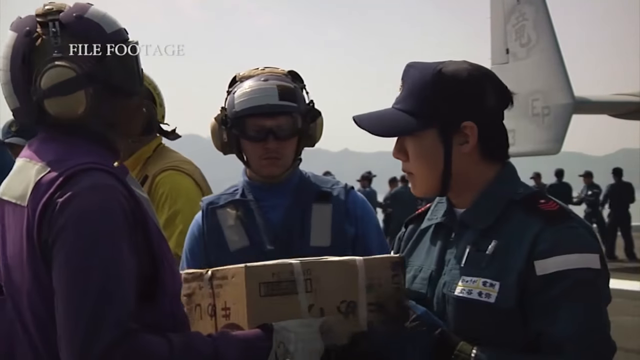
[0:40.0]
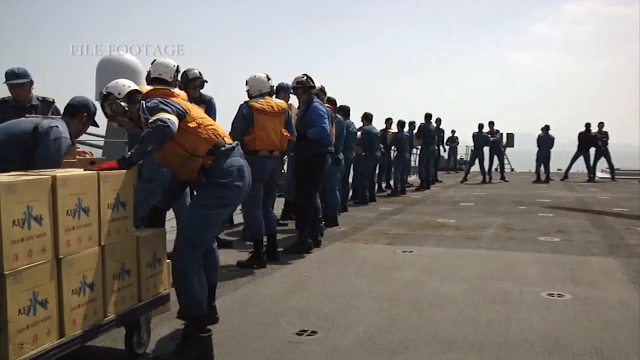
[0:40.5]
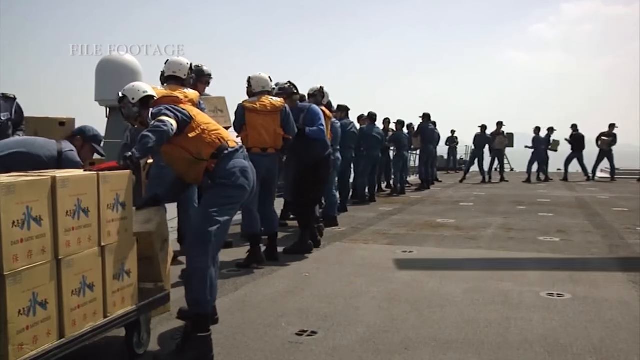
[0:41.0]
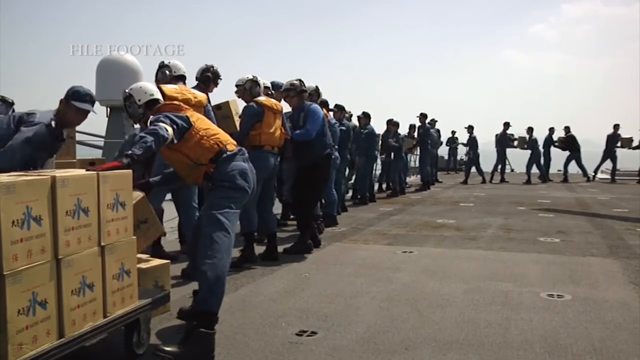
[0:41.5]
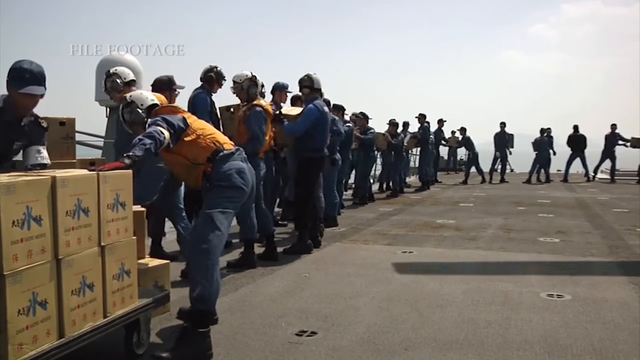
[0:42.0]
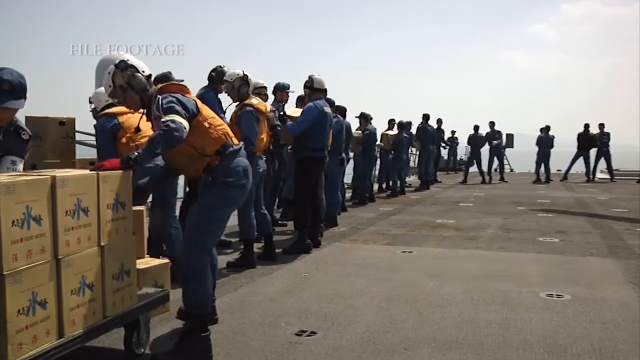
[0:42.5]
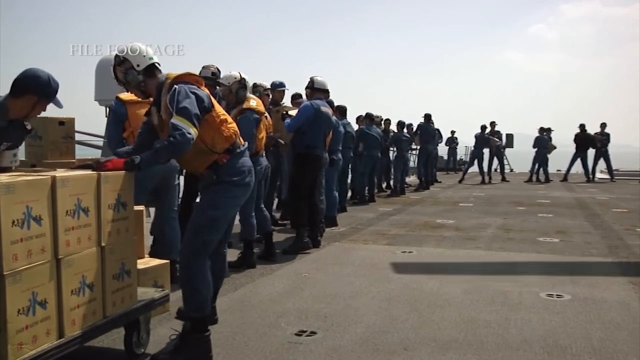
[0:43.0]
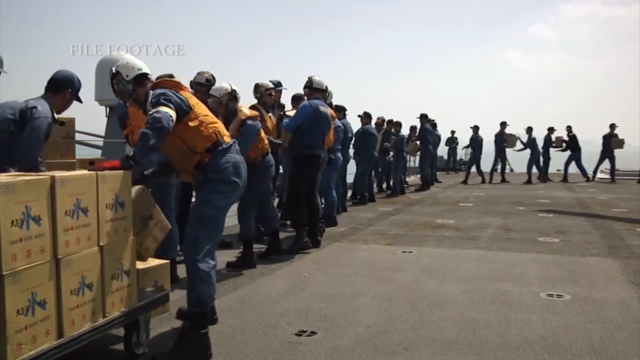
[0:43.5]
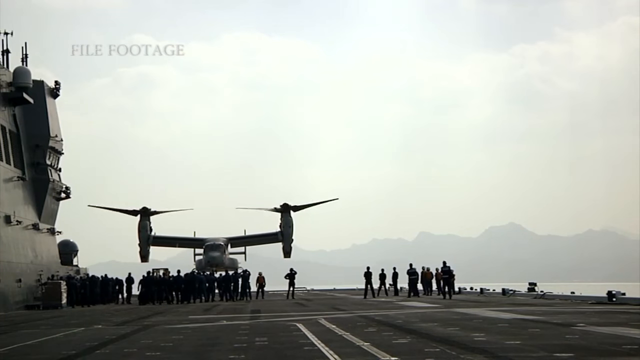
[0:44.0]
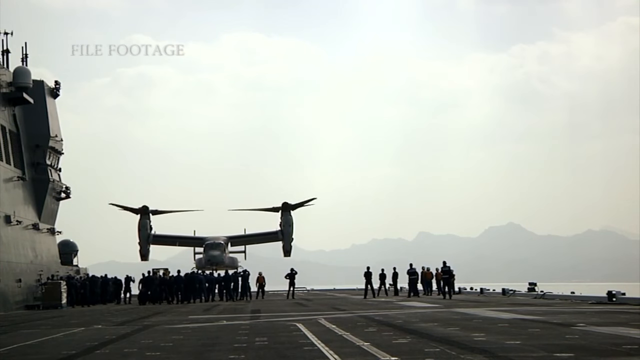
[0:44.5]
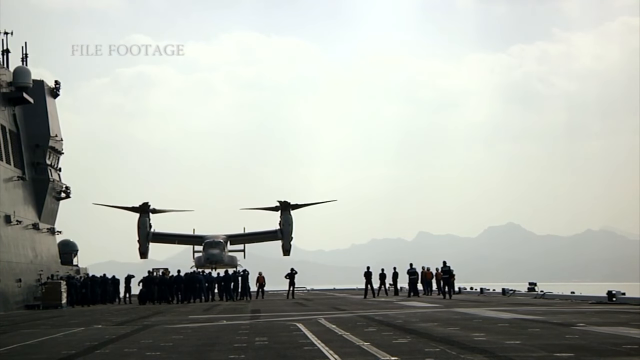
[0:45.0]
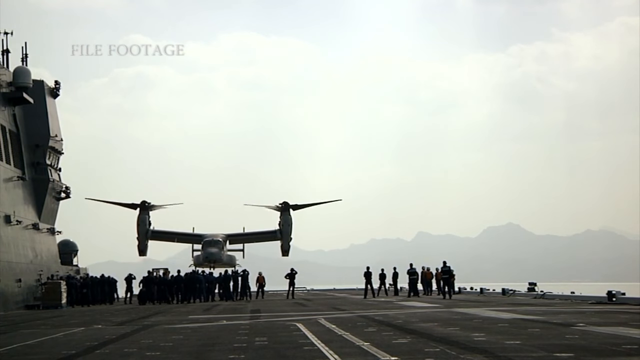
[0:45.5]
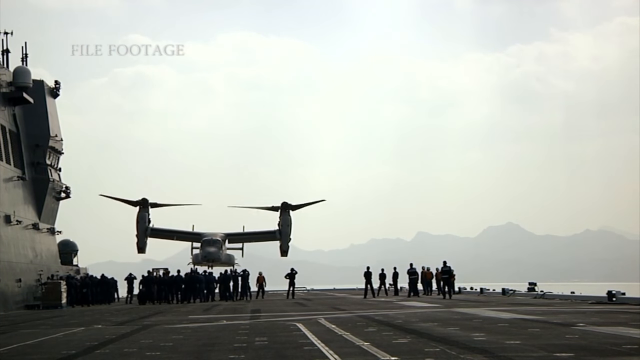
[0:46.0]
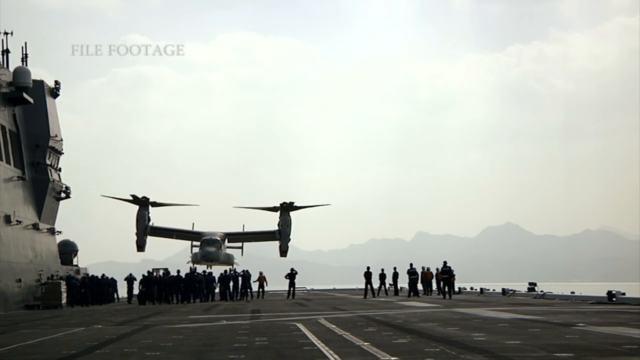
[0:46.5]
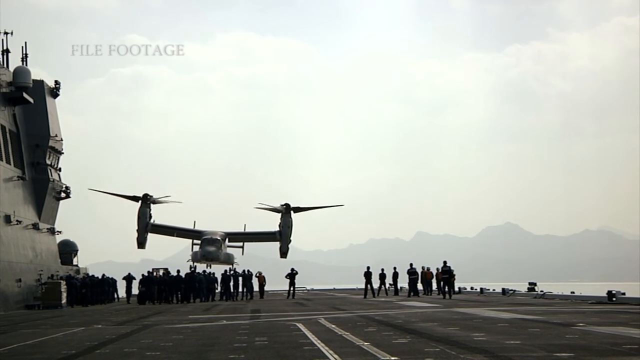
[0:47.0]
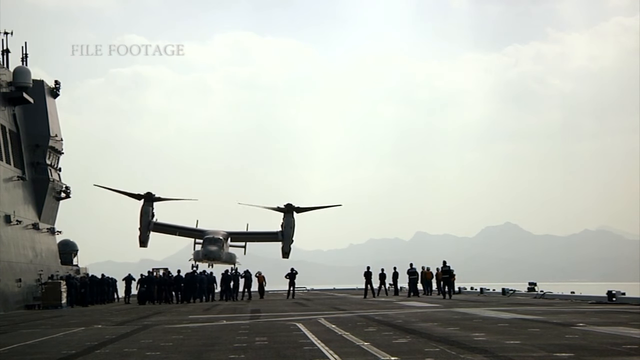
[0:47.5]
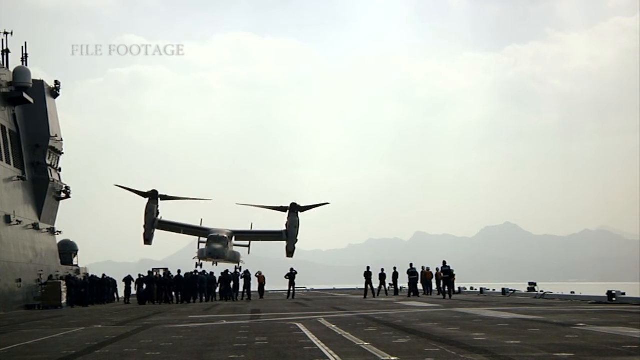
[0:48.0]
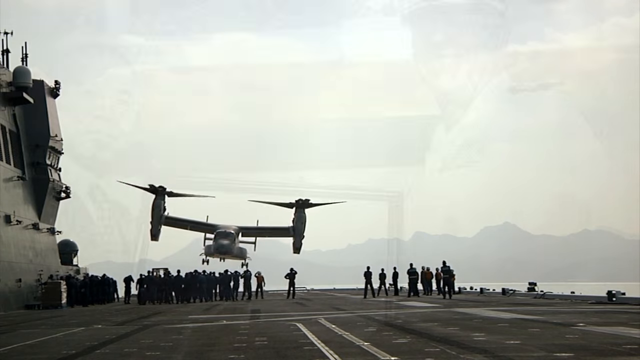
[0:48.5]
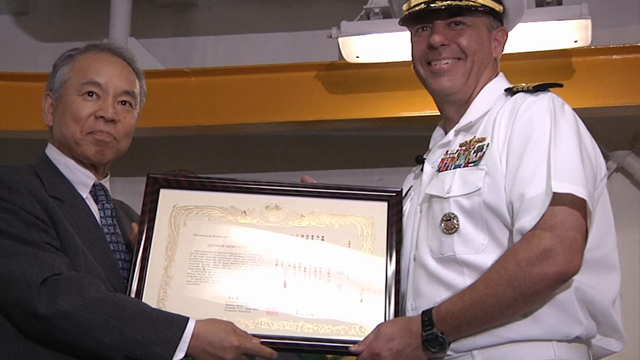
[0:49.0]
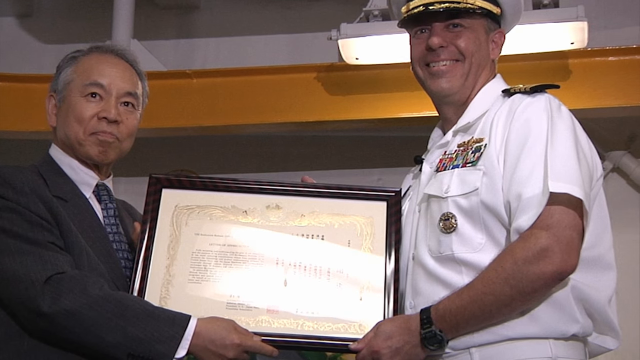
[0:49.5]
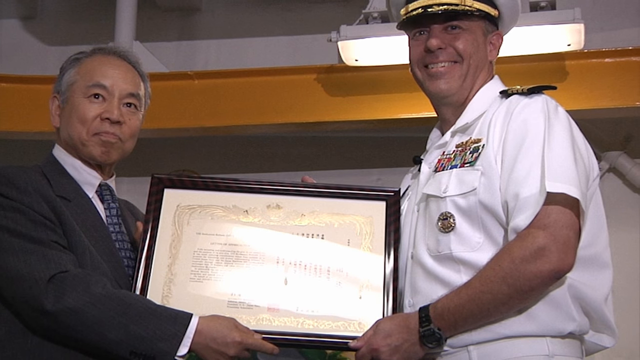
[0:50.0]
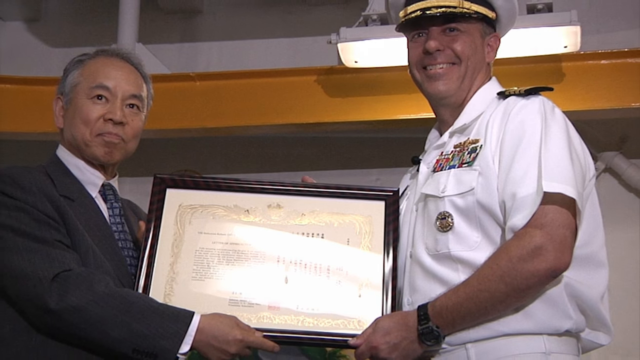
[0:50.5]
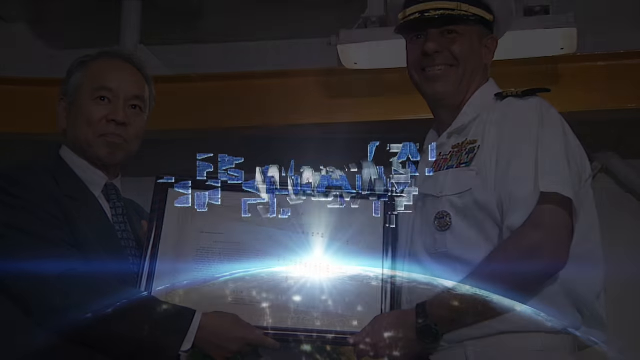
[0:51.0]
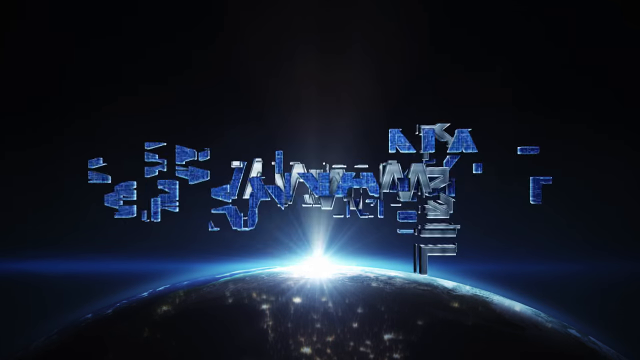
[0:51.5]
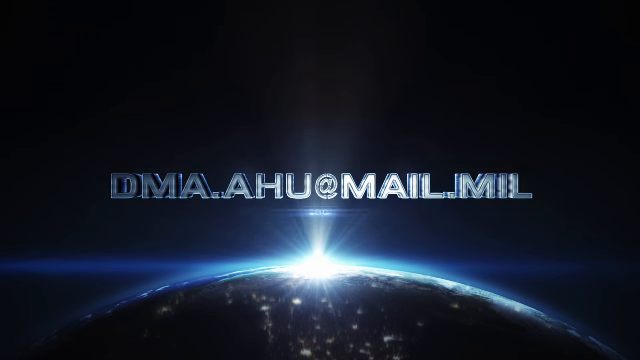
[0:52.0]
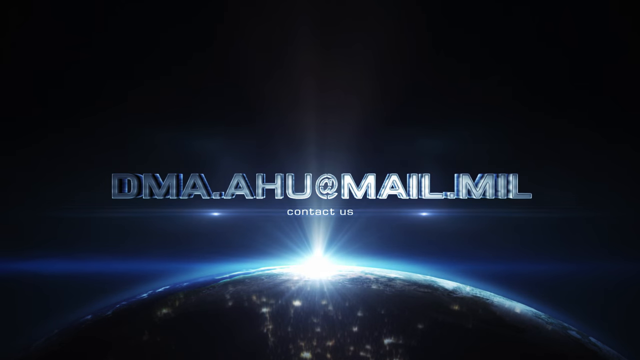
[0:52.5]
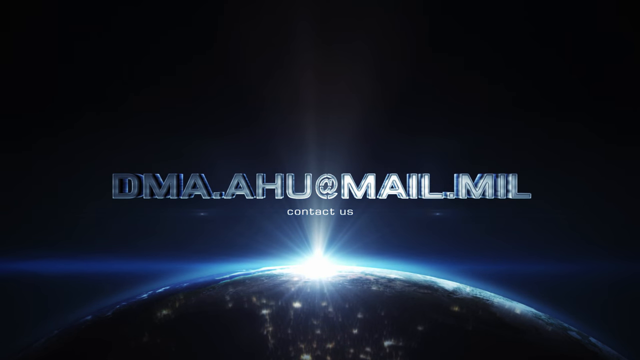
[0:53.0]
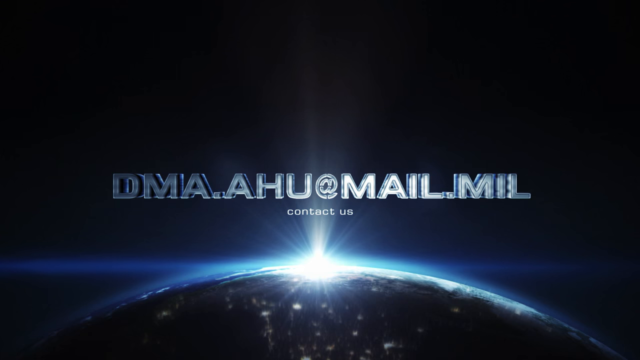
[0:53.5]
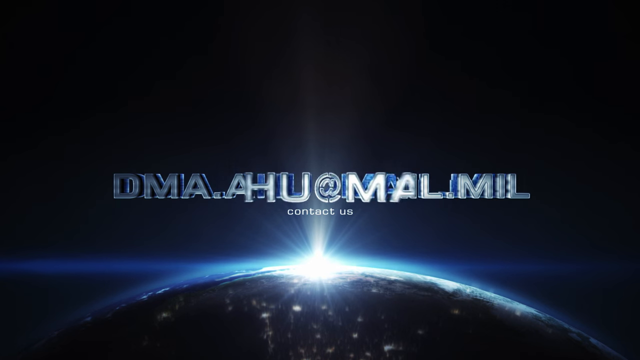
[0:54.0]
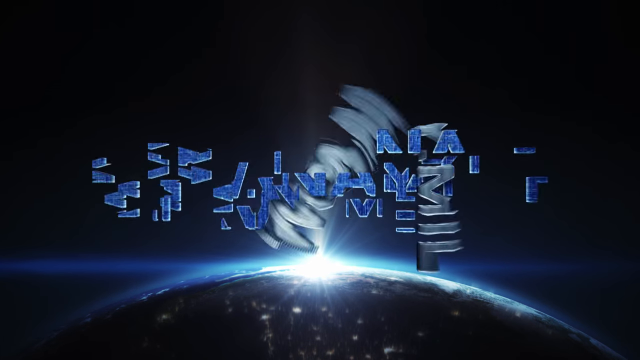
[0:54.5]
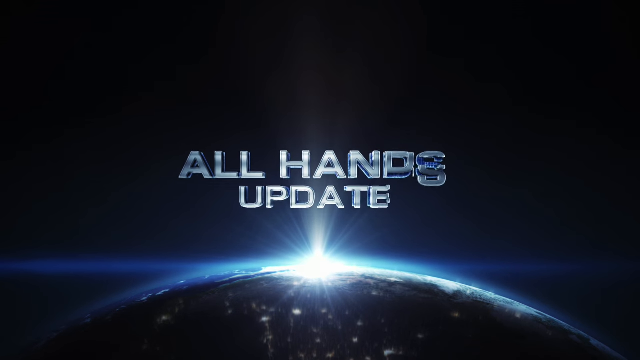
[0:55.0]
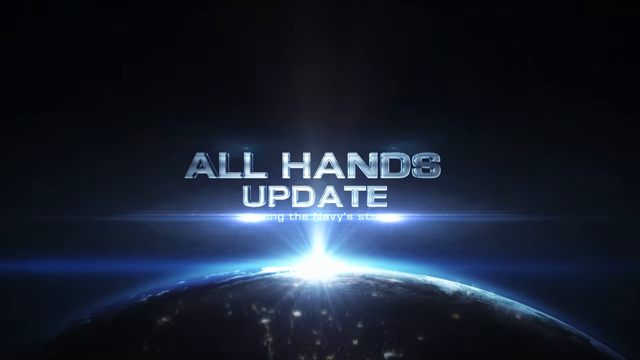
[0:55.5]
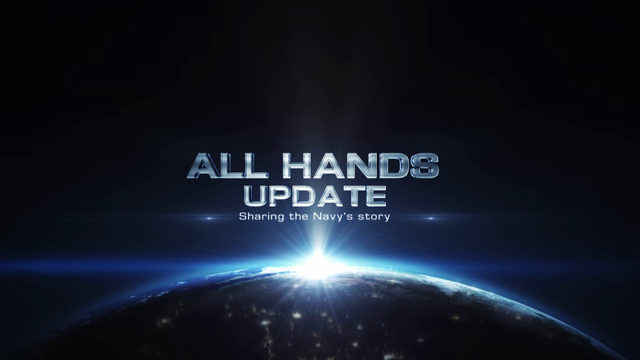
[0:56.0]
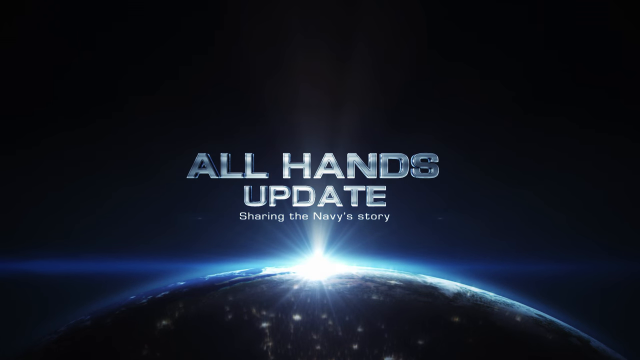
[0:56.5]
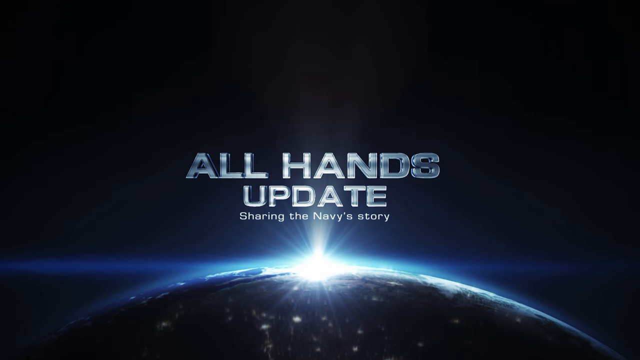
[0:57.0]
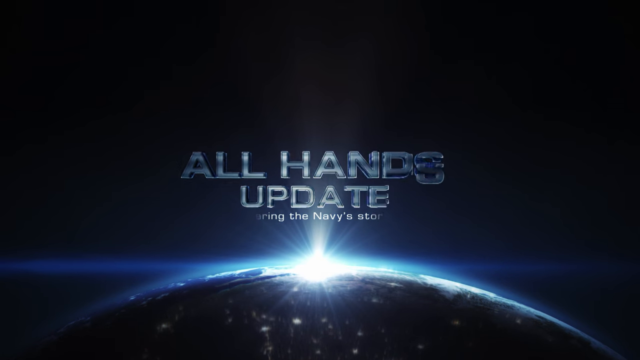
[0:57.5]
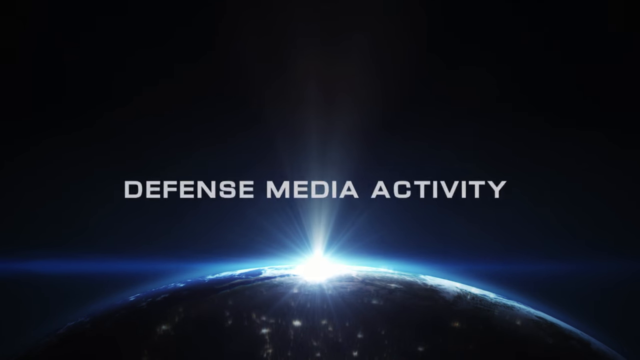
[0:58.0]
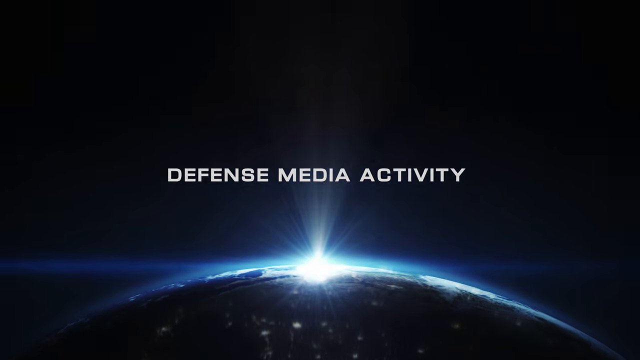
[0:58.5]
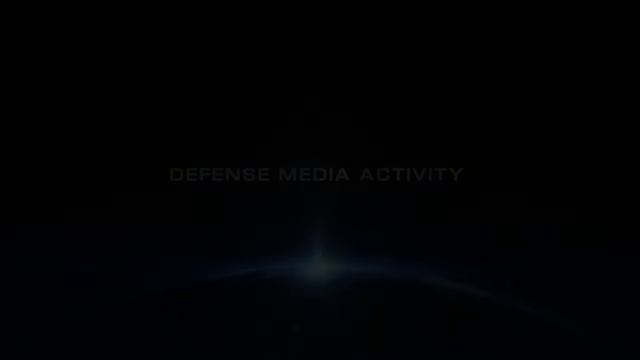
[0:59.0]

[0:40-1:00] The assembly line continues, with a sizable group of American and Japanese men moving boxes from a large cart; the boxes' destination is unclear. An aircraft with two spinning blades, one on each end of the wing, hovers in the air; its body is kind of like a plane, but the propellers on top are horizontal like a helicopter's. The scene closes with the Asian man and the captain holding up what looks like a certificate or something sealed, apparently written in English and Japanese, and smiling. The Japanese man stays closed-mouthed, and though he smiles, his mouth kind of turns down. The video cuts to closing information reading "contact us dma.ahu.mail.mil," followed by text identifying it as an "all-hands update sharing the Navy's story" and "Defense Media Activity."